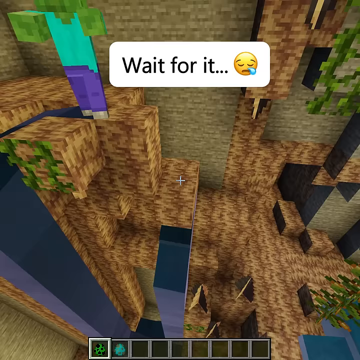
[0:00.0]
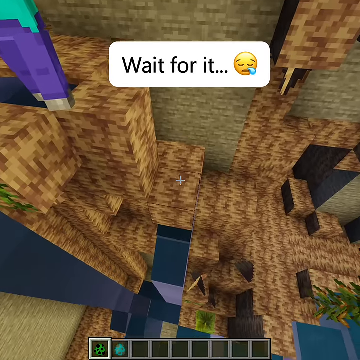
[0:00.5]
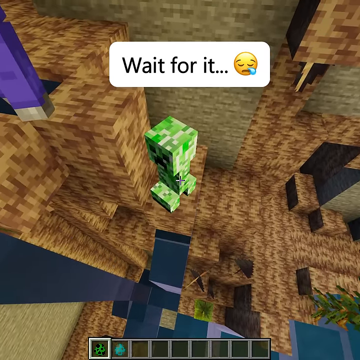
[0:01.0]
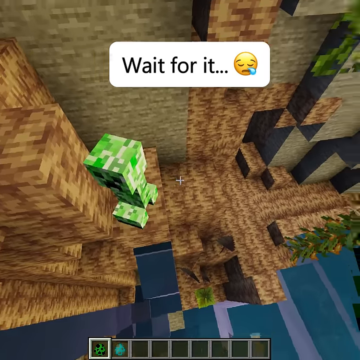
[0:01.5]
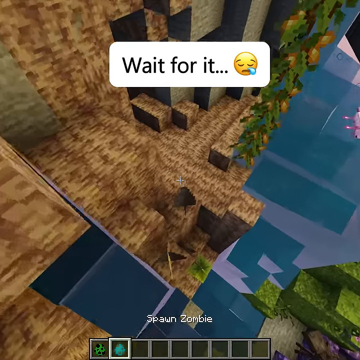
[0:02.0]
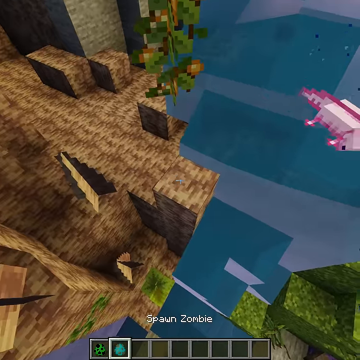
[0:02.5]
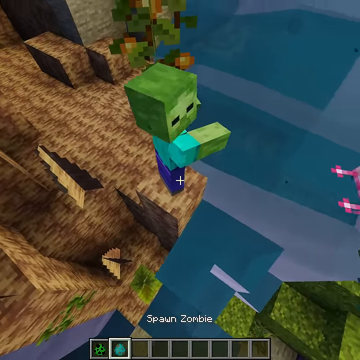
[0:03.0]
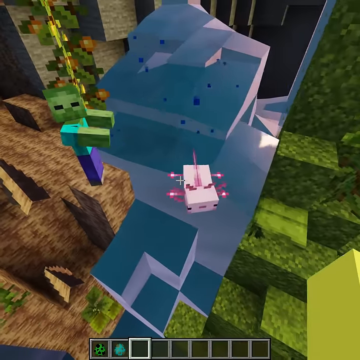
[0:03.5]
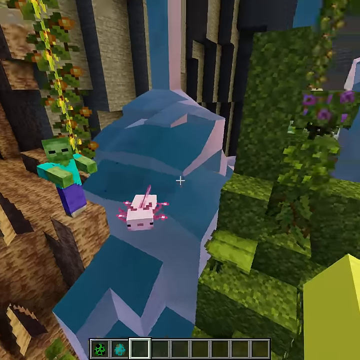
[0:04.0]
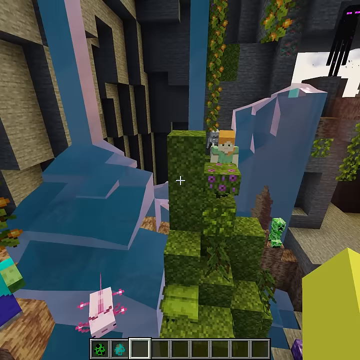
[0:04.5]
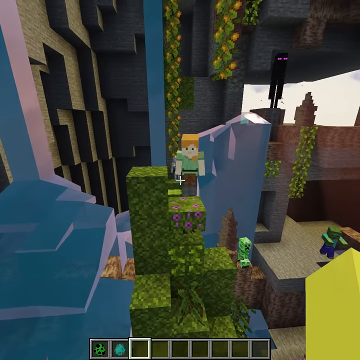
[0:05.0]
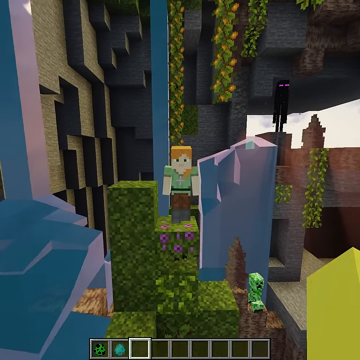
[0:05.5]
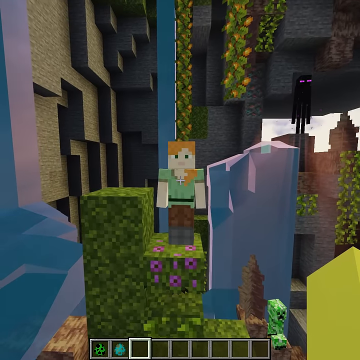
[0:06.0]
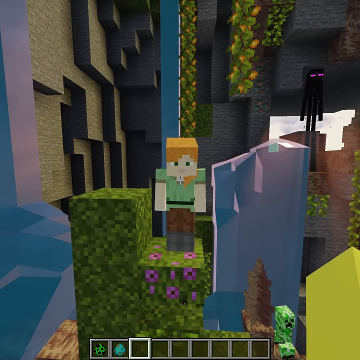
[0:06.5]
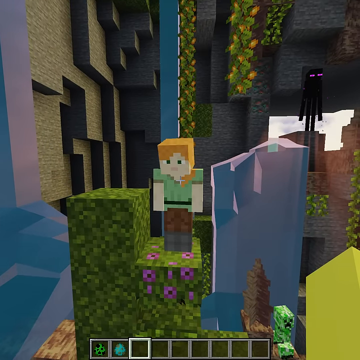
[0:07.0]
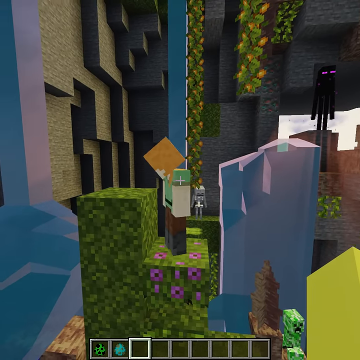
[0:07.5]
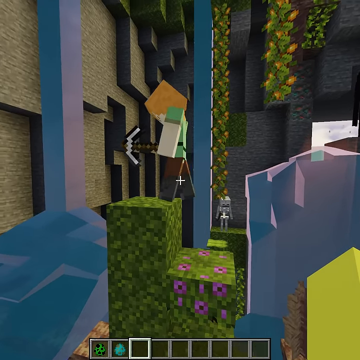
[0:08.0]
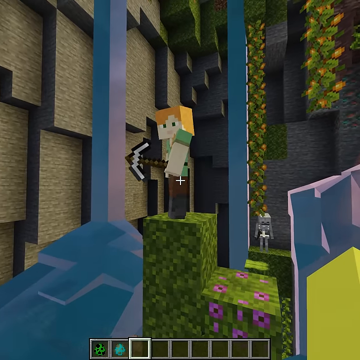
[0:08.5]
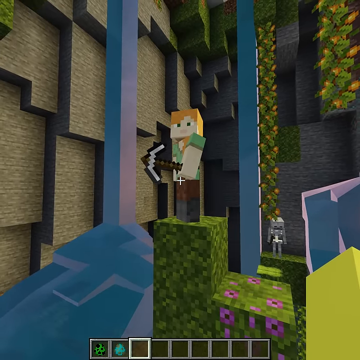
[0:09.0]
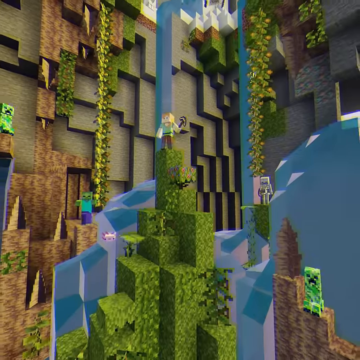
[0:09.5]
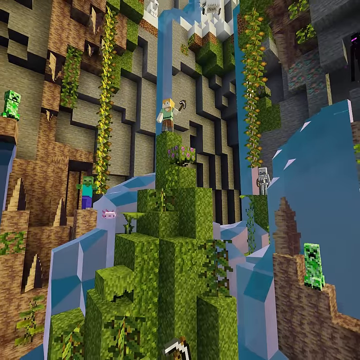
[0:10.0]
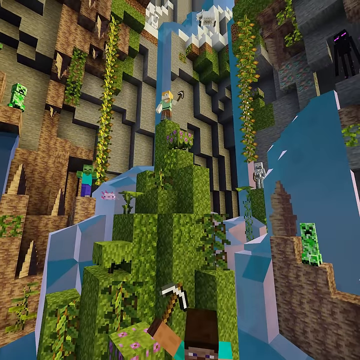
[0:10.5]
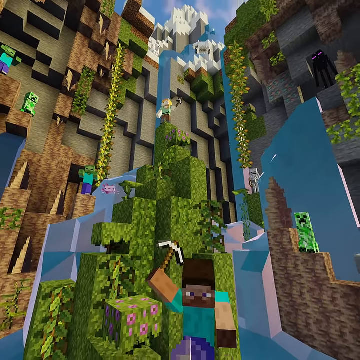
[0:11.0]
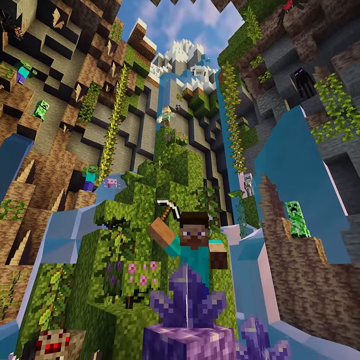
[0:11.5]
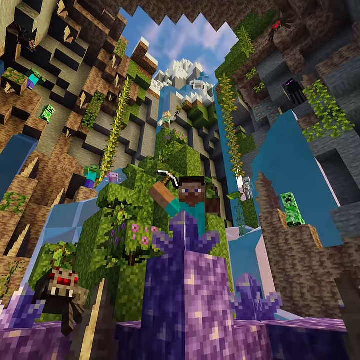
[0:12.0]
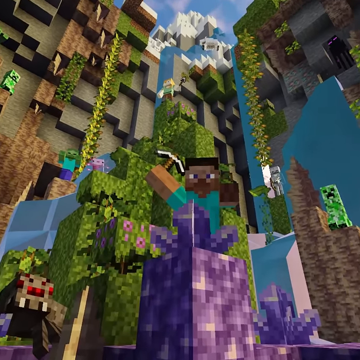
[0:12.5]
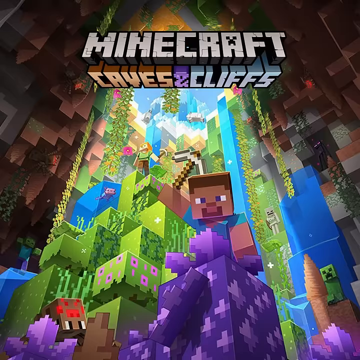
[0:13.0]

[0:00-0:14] A first-person view of the Minecraft video game shows the main player-controlled character walking around on vegetation and looking at other characters. The player places down a couple of items while using a free float method that lets them zoom around. A few other playable characters are shown. The camera zooms out to show what is kind of an overview of a cave system. A logo reading "Minecraft Caves and Cliffs" appears, possibly indicating an expansion pack, with the main Minecraft avatar shown in the middle of the screen. Multi-level vegetation, trees and different parts of the cave are visible. Much of the cave ground is a dark brown area, with vegetation hanging from the ceilings and rock walls interspersed in the brown dirt. The characters are inside the cave, maybe having dug down, and the footage shows off the overall setting.